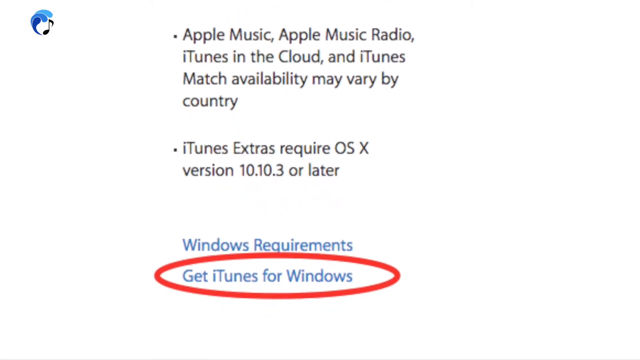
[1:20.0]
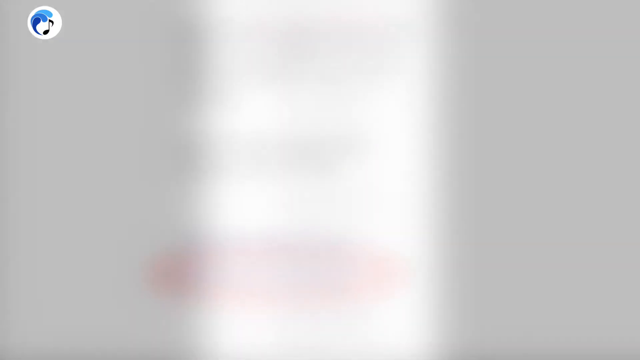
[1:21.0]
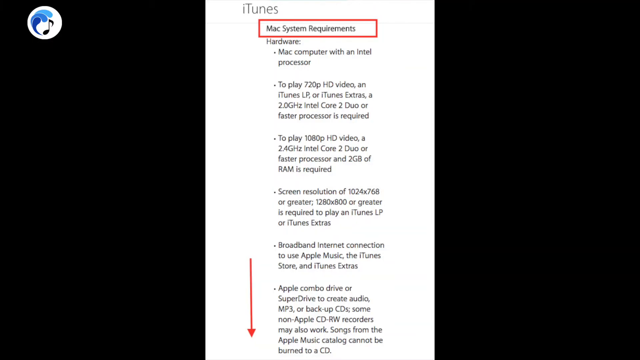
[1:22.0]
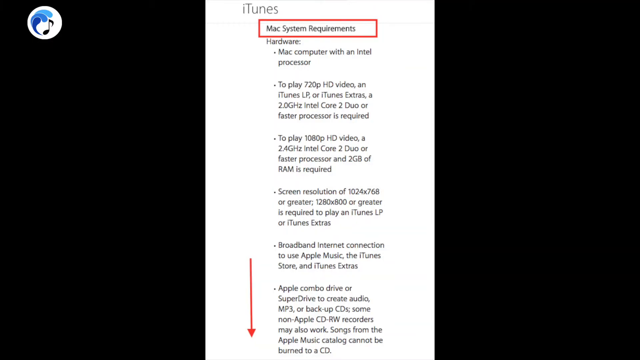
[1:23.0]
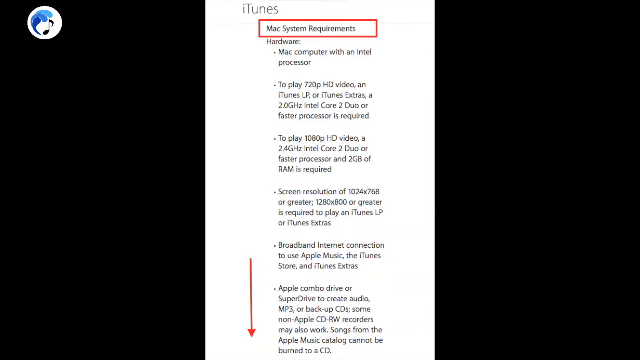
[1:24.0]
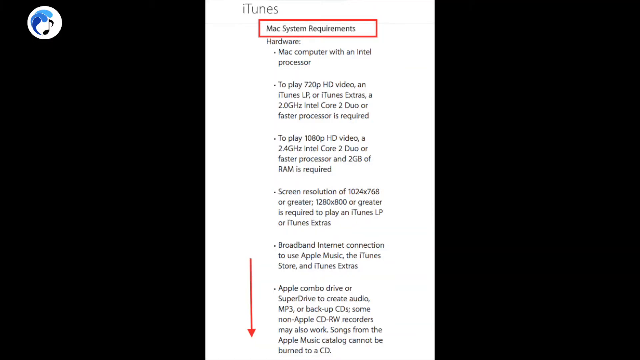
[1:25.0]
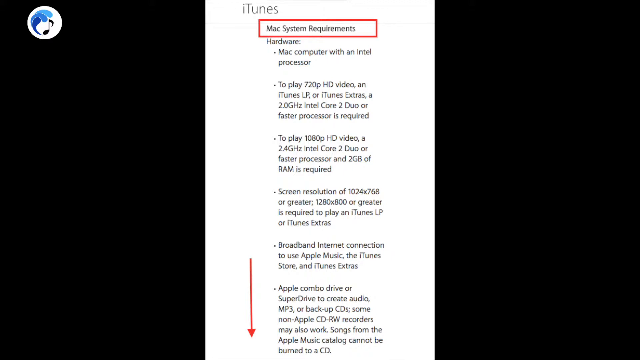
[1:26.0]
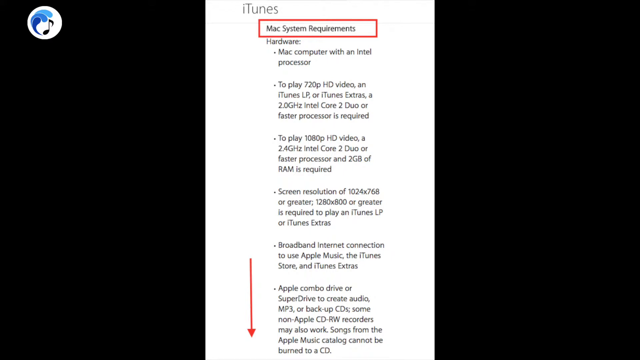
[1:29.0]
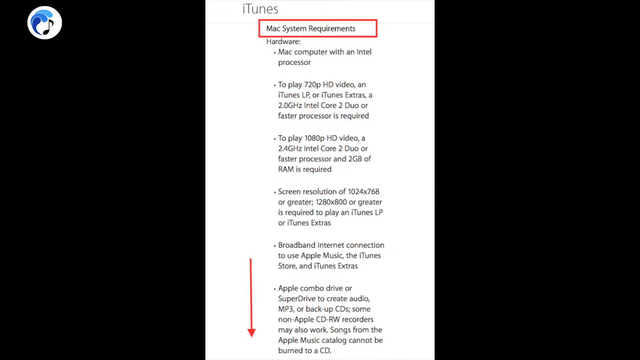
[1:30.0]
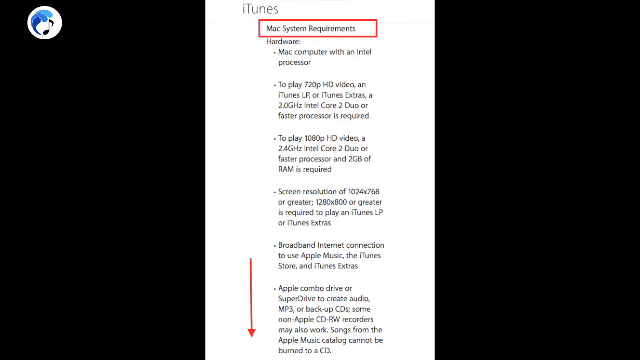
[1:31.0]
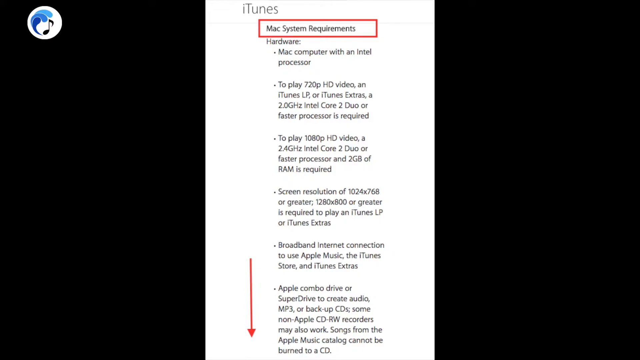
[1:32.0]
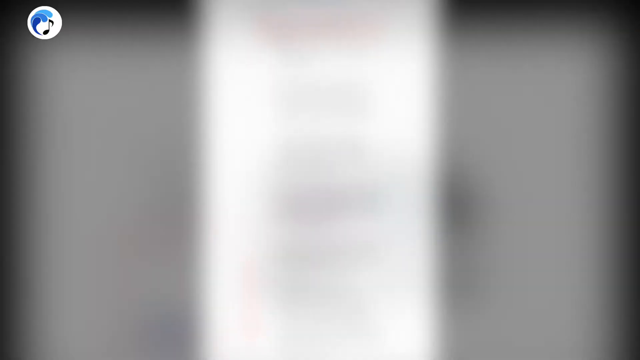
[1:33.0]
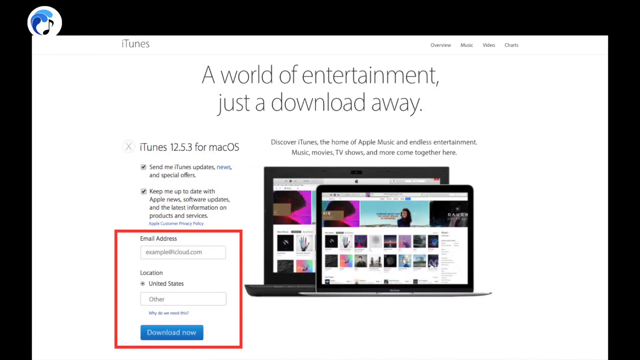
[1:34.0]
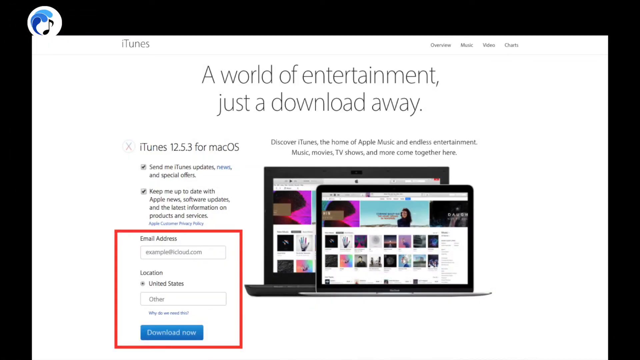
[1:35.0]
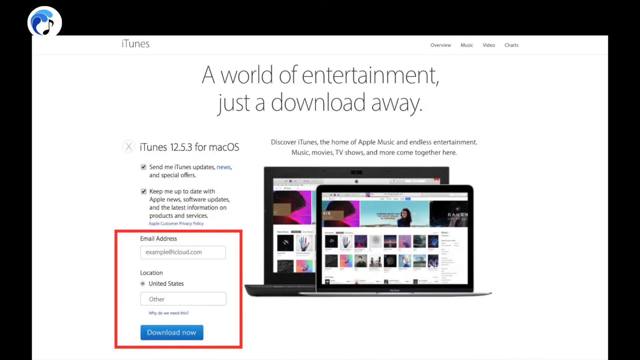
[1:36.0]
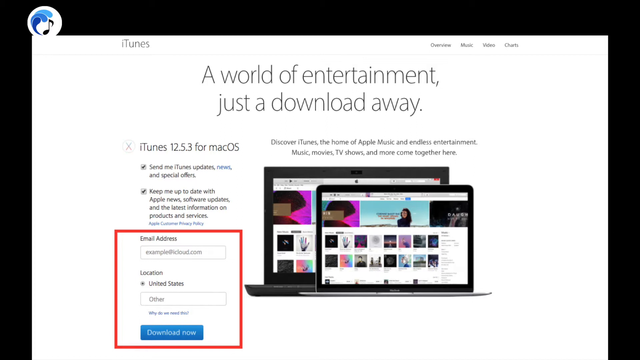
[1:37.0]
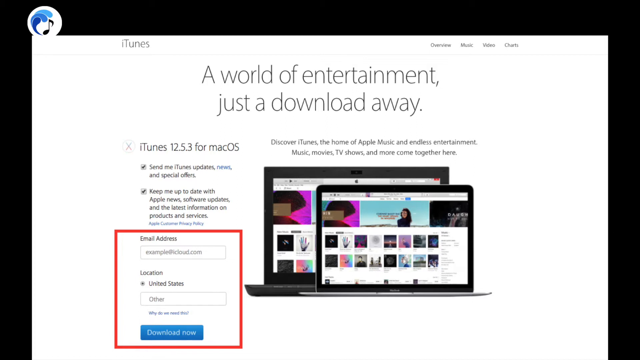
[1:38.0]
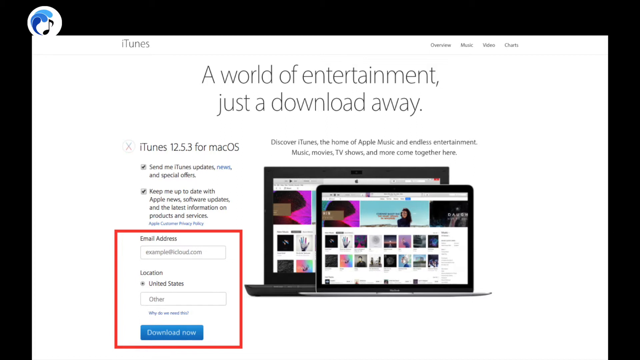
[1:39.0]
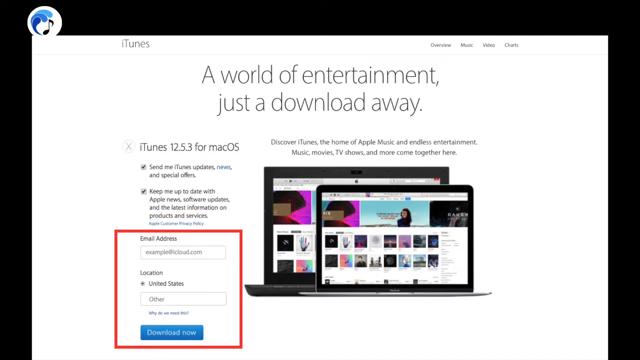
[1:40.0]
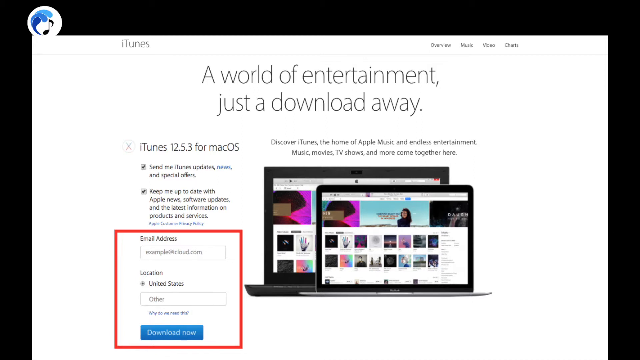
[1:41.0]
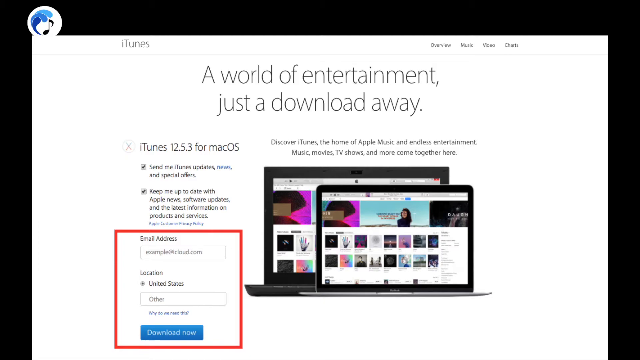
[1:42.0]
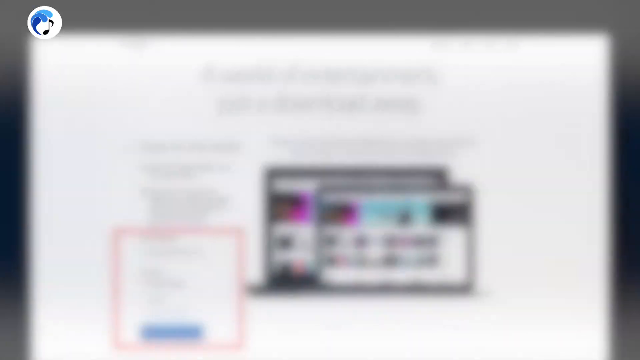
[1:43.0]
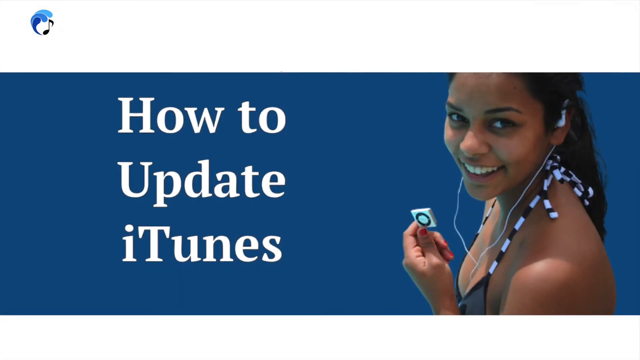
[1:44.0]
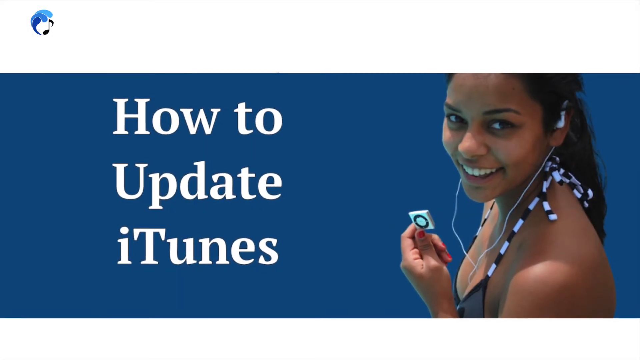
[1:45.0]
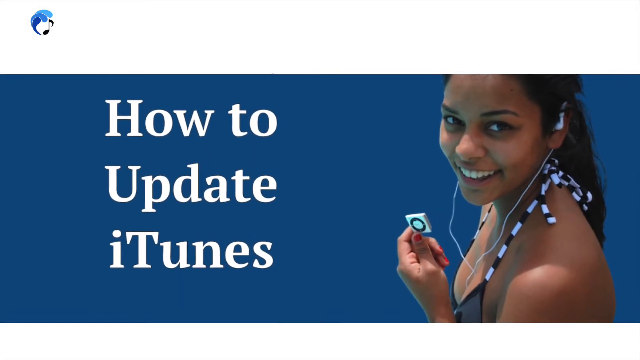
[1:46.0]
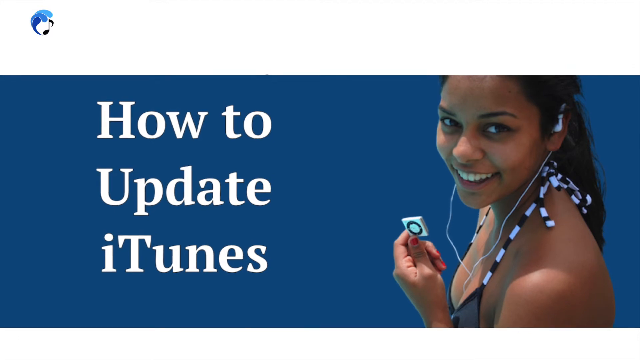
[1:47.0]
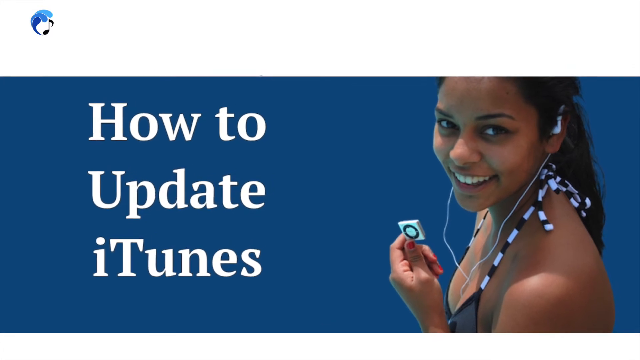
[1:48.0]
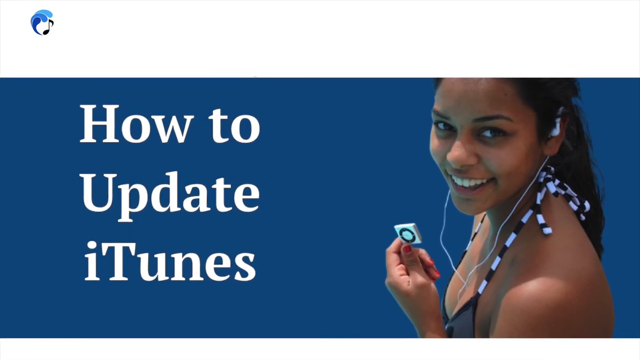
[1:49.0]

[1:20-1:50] The view is zoomed in on one part of what seems to be the same page, maybe scrolled further down, showing content not visible before. Three bullet points read "400 MB of available disk space," "Apple Music, Apple Music Radio, iTunes in the cloud, and iTunes match availability may vary by country," and "iTunes extras require OS X version 10.10.3 or later." Below is "Windows requirements" in blue hyperlinked text, and under that "get iTunes for Windows," also hyperlinked, with a red circle around it, apparently the next step in the directions. The view slowly zooms in, then zooms back out to an iTunes page reading "Mac system requirements," with a red box around it. The text says "hardware Mac computer with an Intel processor to play 720 HD video and iTunes LP or iTunes extras" and "A 2.0 gigahertz Intel Core 2 Duo or faster processor is required."